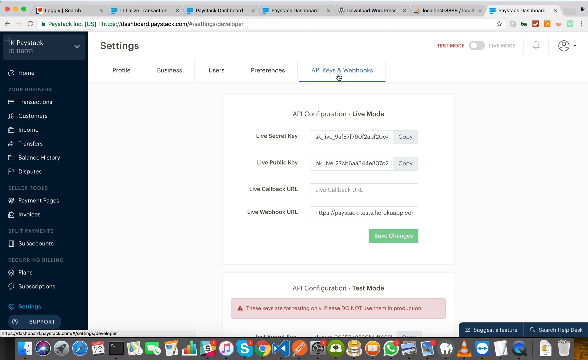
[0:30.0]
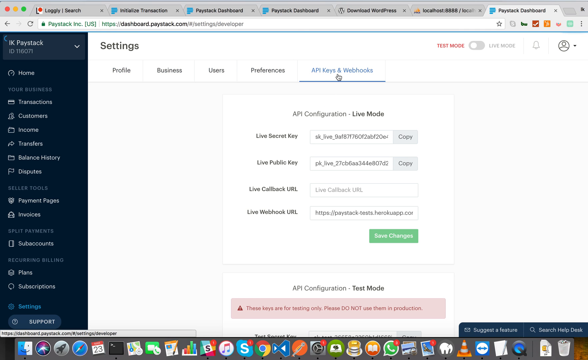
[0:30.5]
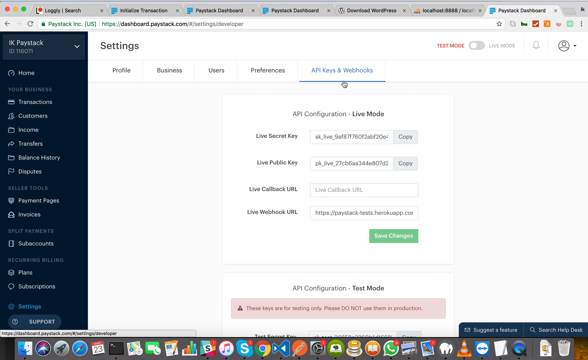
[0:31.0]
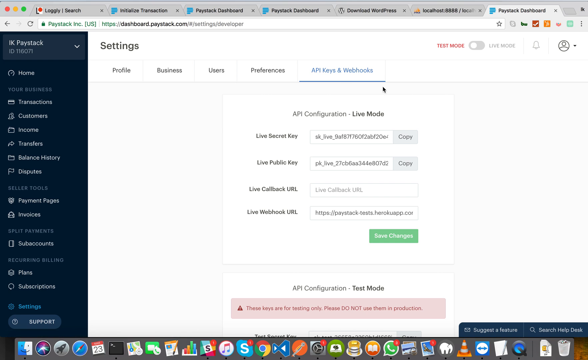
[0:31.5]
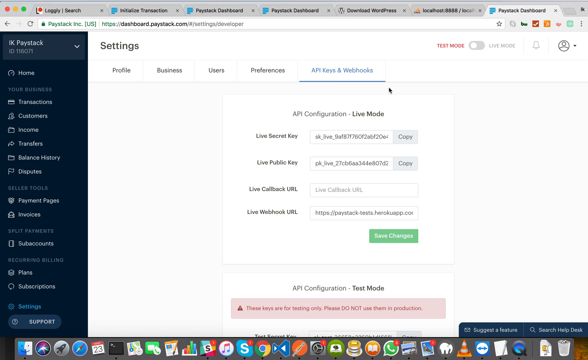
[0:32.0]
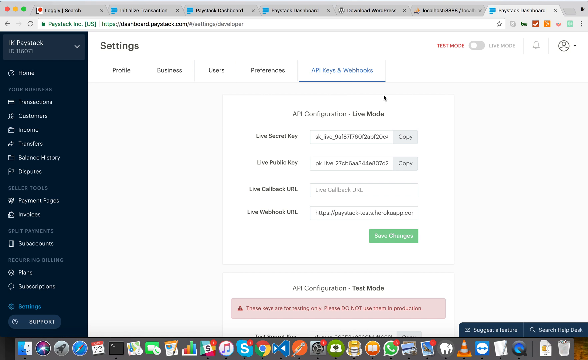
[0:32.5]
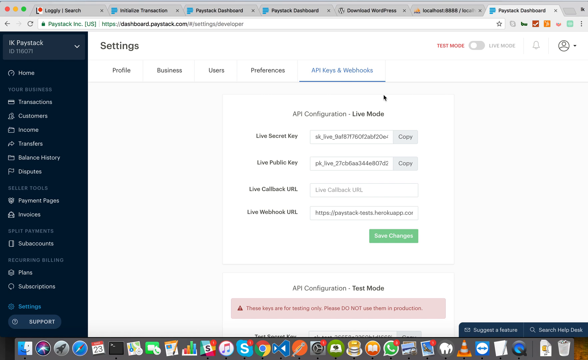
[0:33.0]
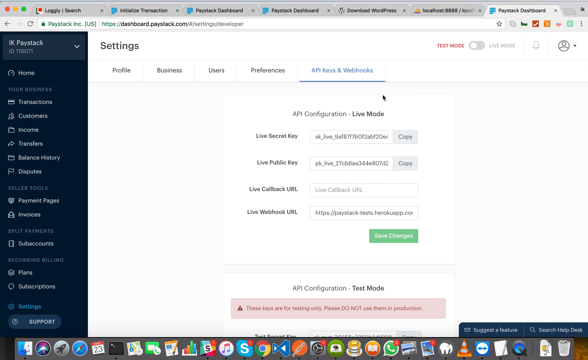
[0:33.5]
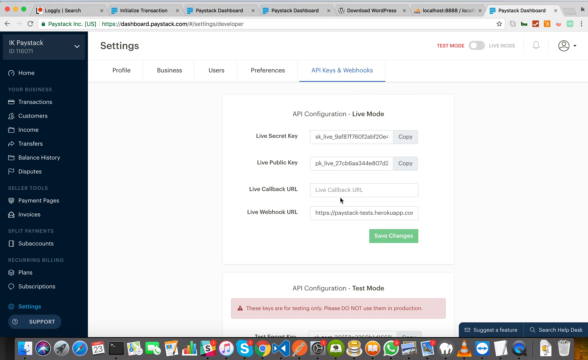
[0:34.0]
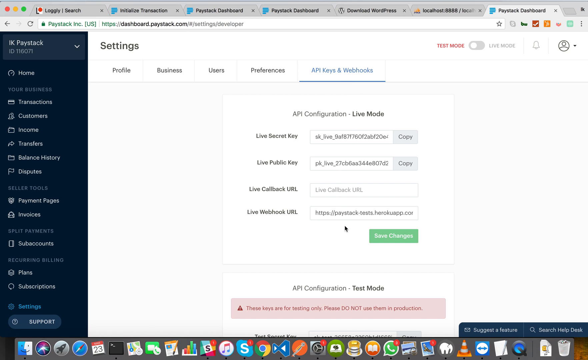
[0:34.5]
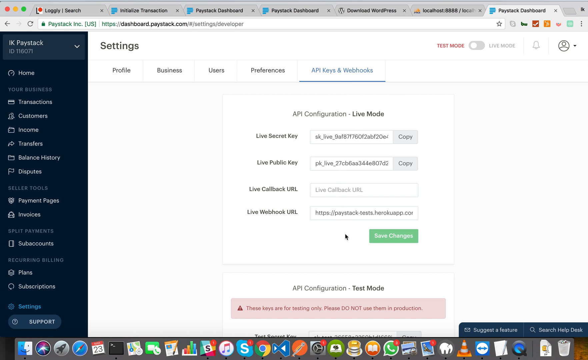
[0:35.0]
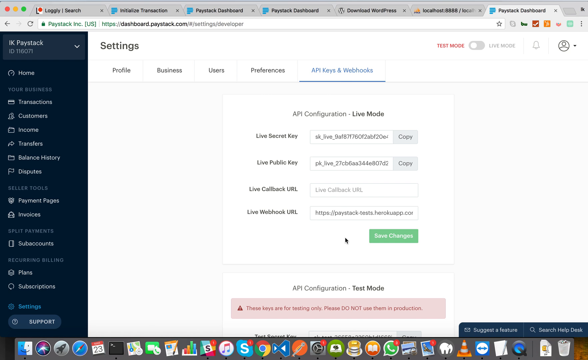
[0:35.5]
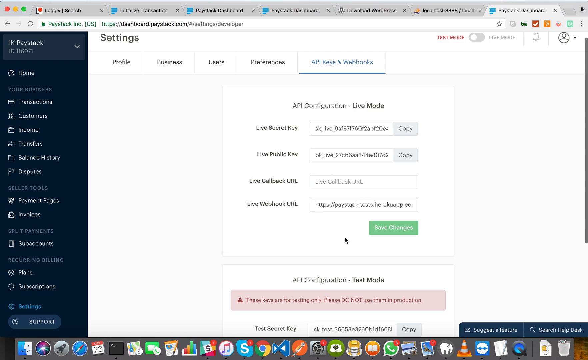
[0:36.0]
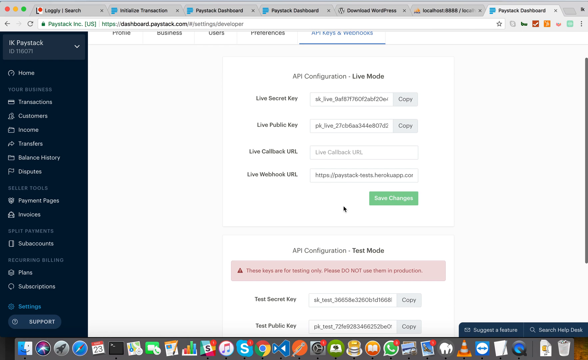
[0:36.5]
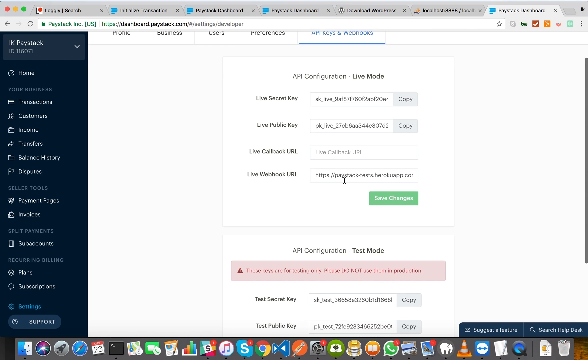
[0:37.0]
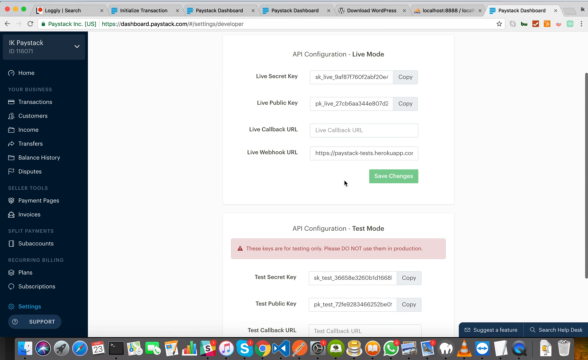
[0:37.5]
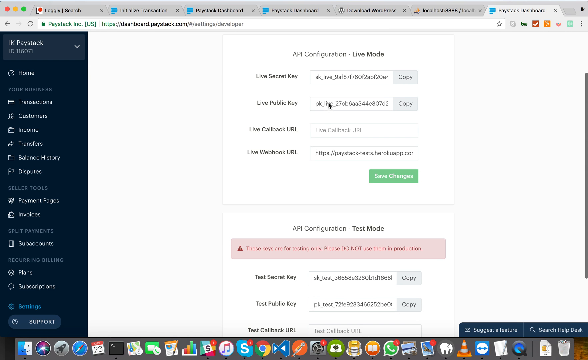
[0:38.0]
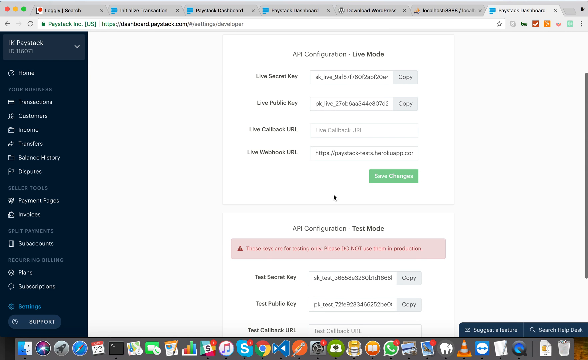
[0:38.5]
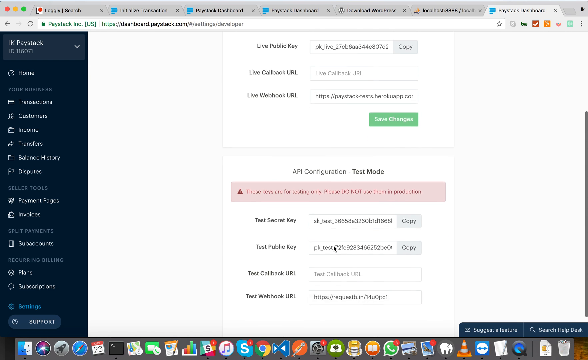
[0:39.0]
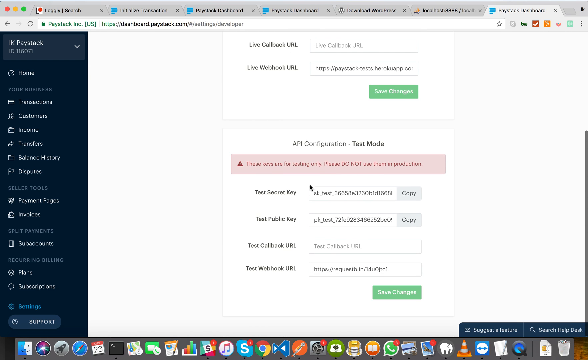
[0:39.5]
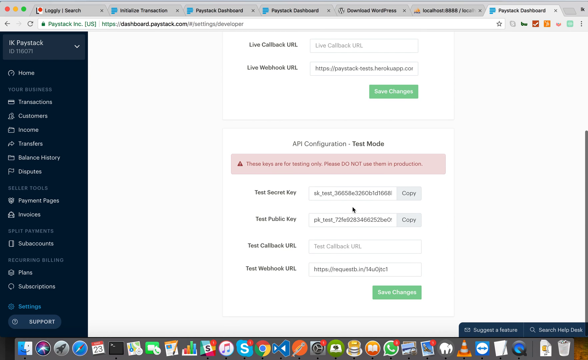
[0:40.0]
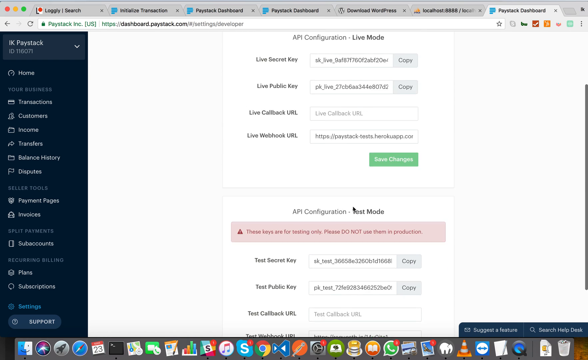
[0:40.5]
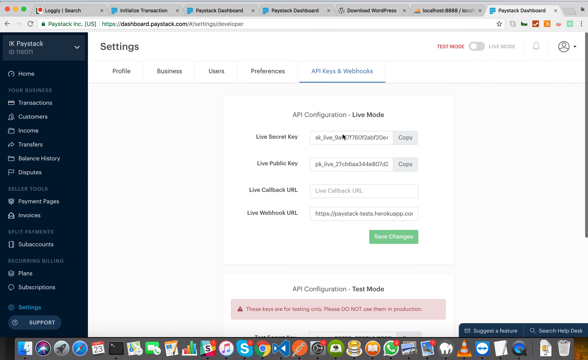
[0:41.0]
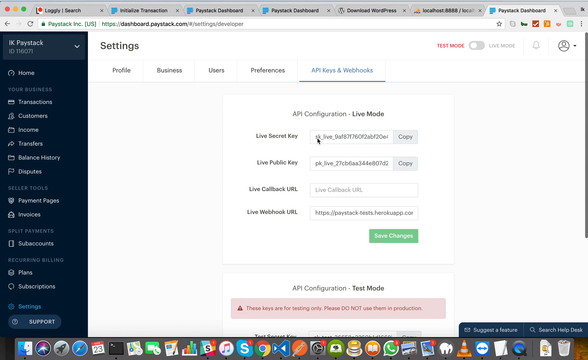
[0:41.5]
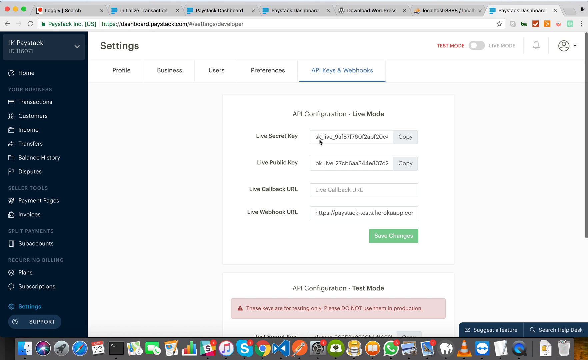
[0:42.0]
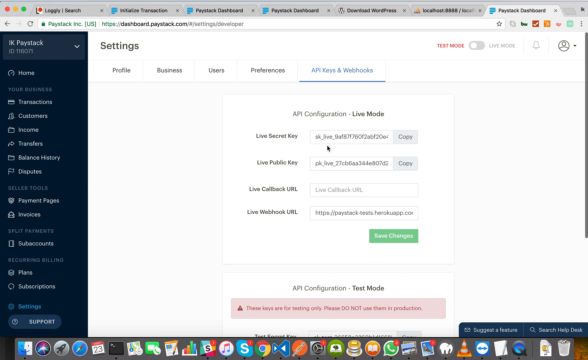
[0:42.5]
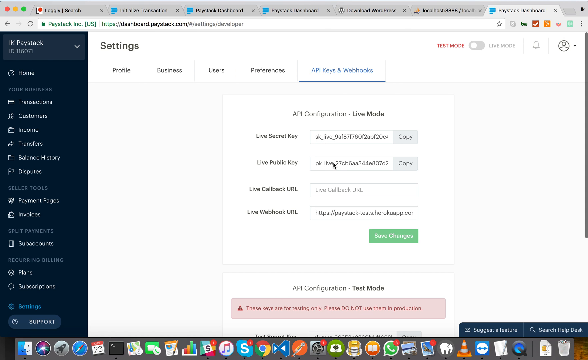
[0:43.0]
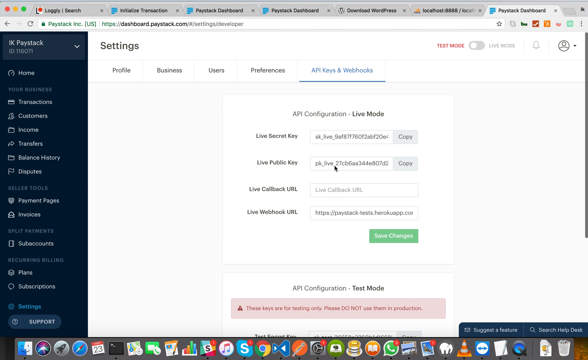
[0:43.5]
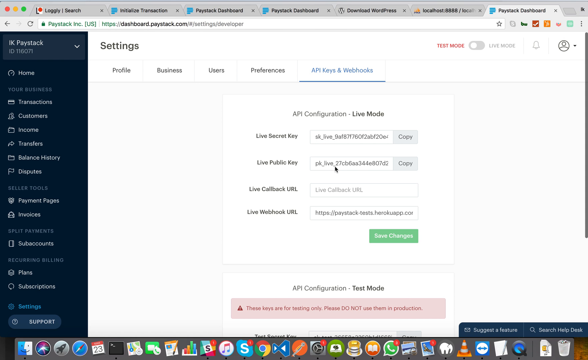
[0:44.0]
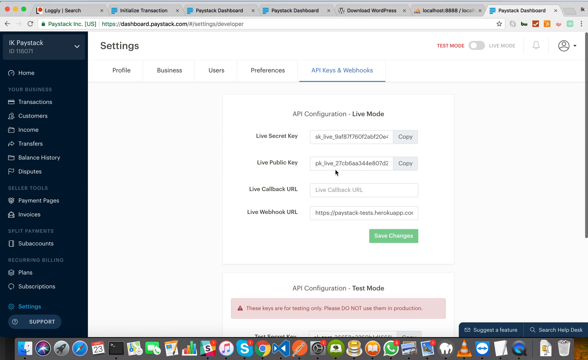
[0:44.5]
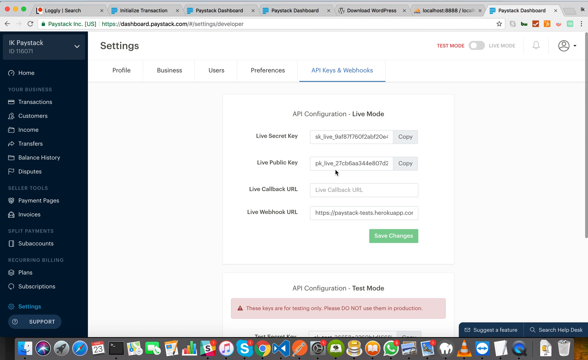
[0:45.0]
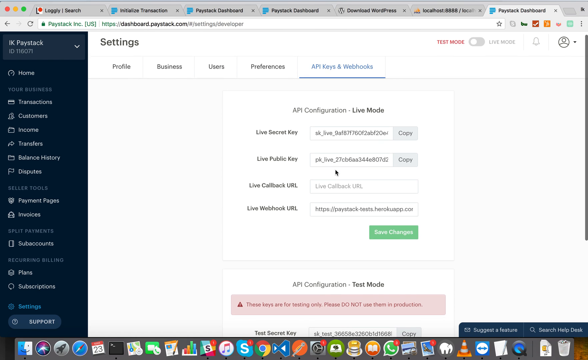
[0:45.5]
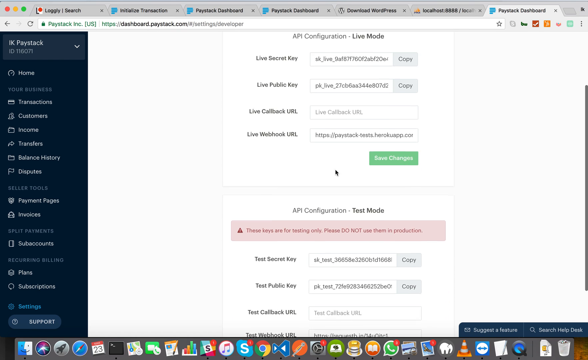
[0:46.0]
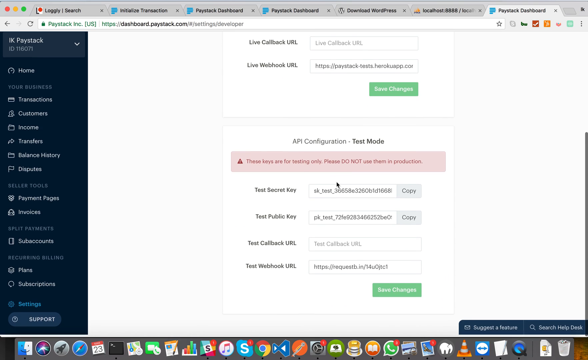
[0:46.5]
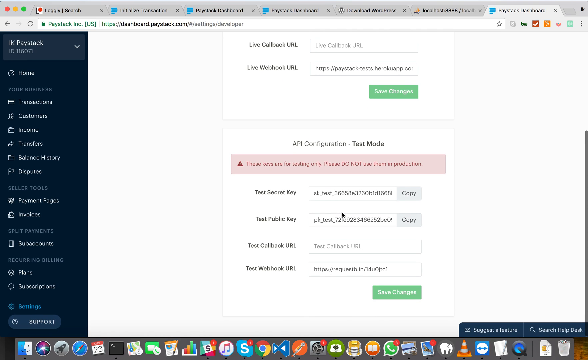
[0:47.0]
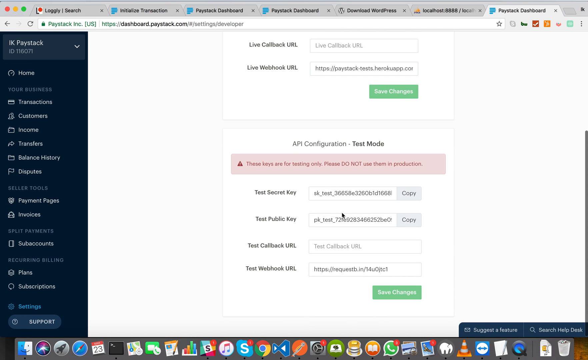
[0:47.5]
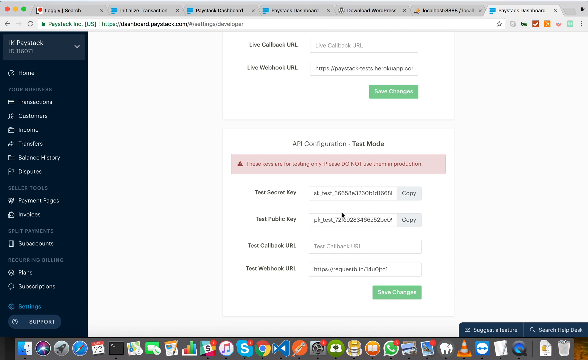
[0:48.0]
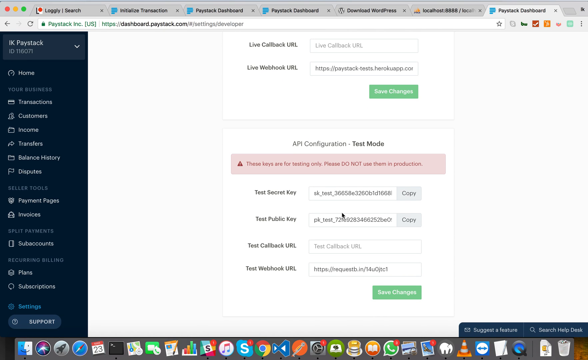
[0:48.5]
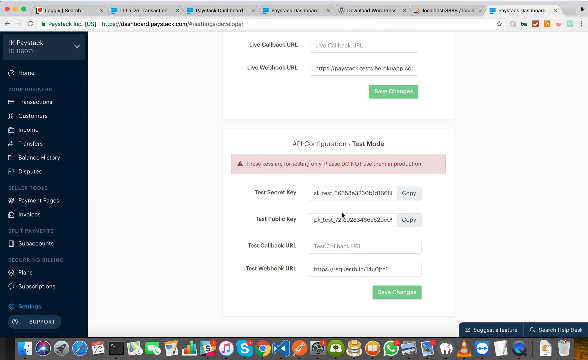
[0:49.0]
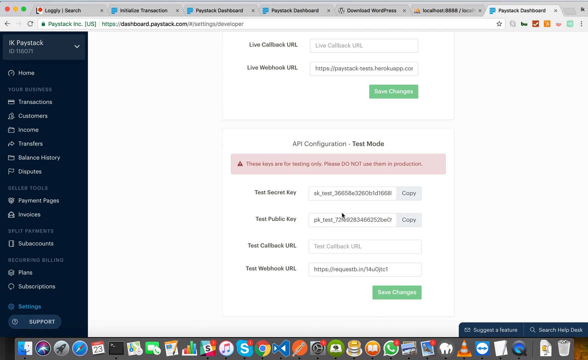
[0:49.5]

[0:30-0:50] The settings page for IK Paystack shows API keys and webhooks, with "API configure live mode" underneath. The mouse arrow hovers over the API keys and webhooks. The API configuration for live mode lists the live secret key, the live public key, the live callback URL, and the live webhook URL. The mouse moves down to the bottom of the page where it says "API configuration test mode" and moves around that area, and a red message pops up that says "these keys are for testing only. Please do not use them in production." The cursor goes back to the top, pointing at a couple of numbers there and at the test secret key and the live secret key, apparently showing how to go from one to the other.